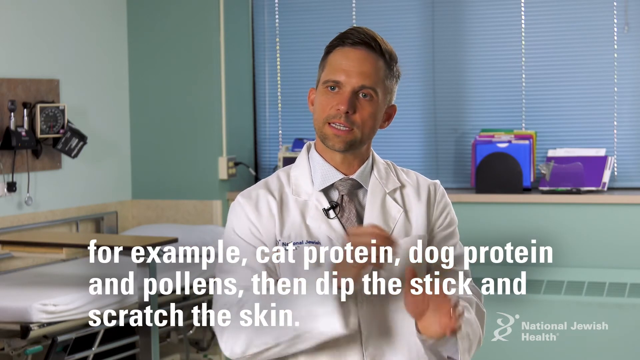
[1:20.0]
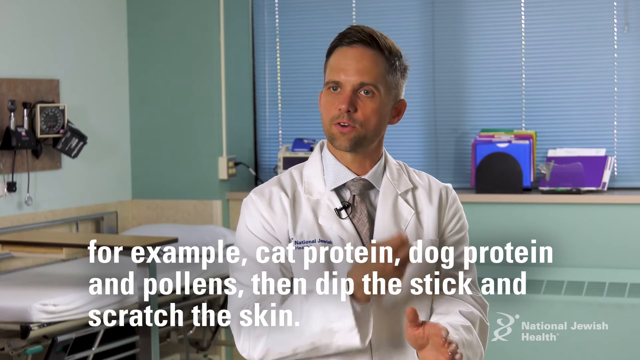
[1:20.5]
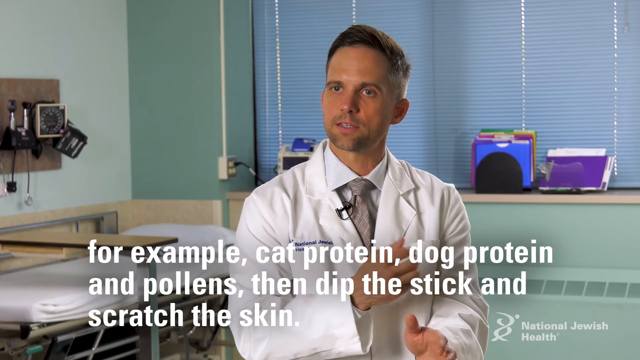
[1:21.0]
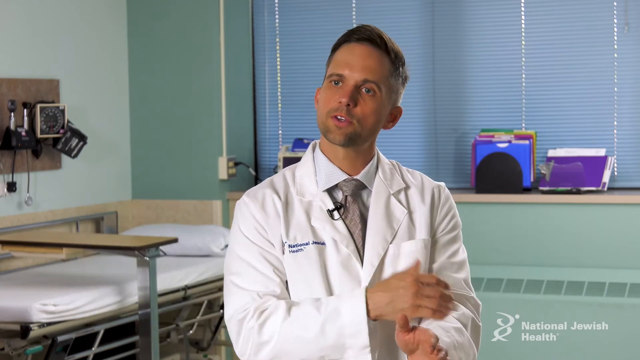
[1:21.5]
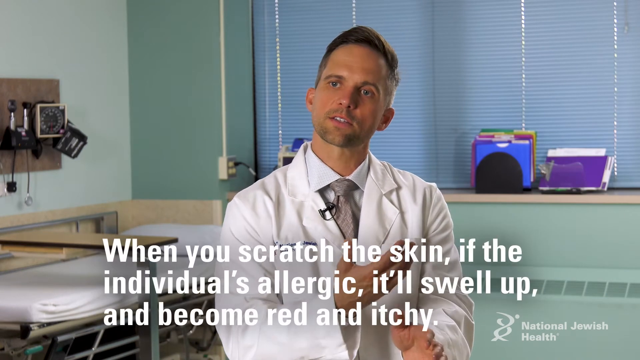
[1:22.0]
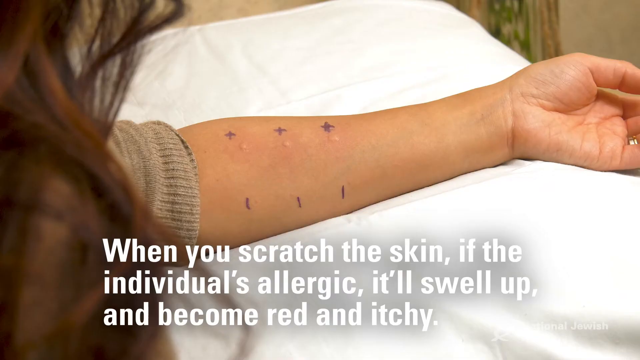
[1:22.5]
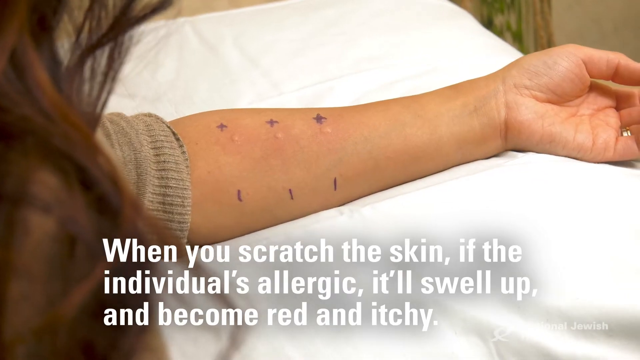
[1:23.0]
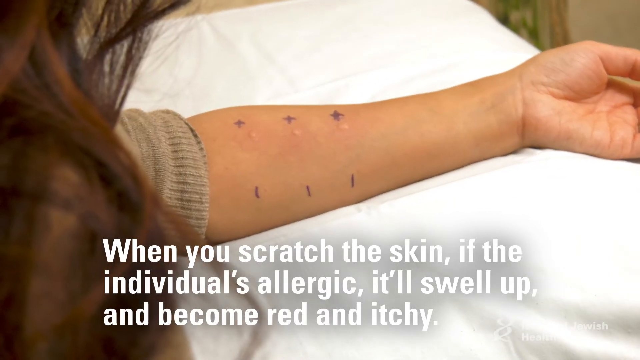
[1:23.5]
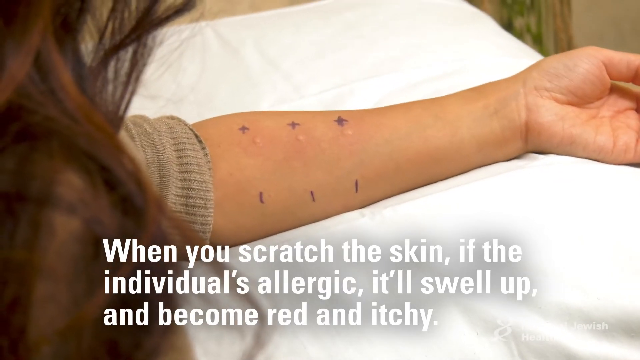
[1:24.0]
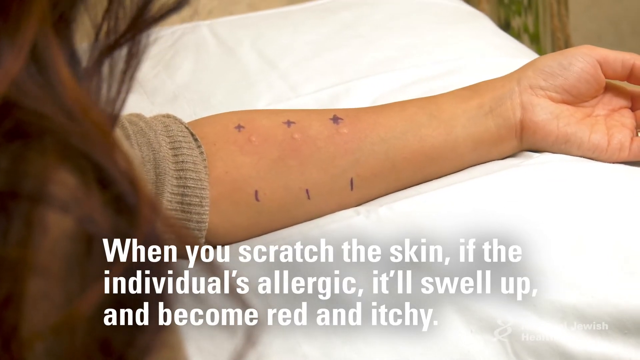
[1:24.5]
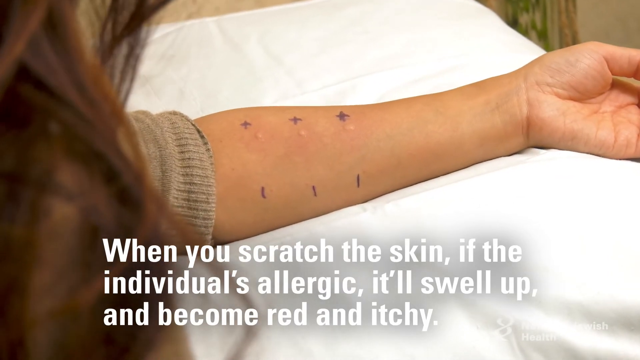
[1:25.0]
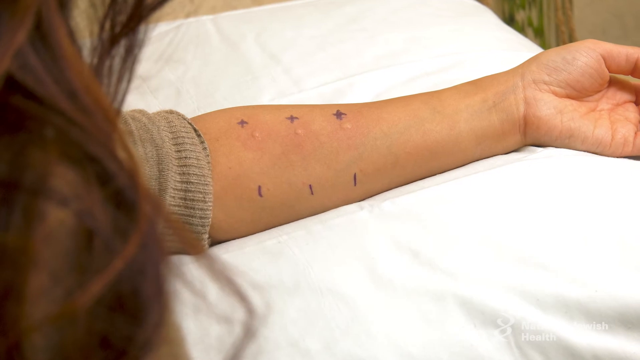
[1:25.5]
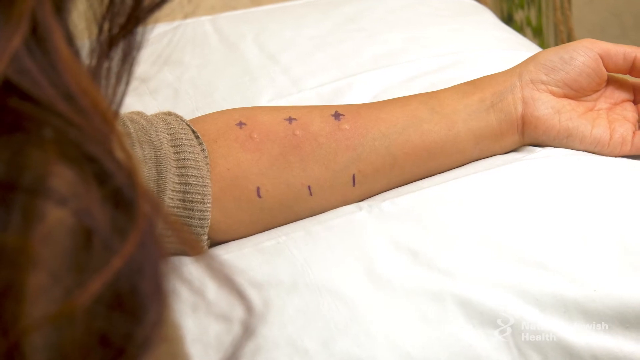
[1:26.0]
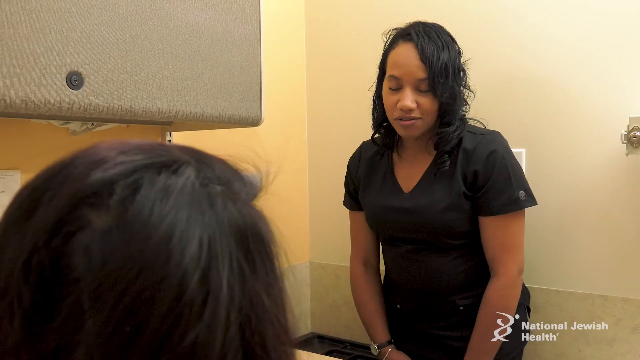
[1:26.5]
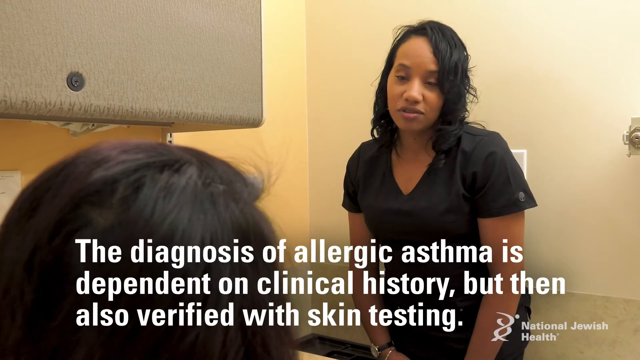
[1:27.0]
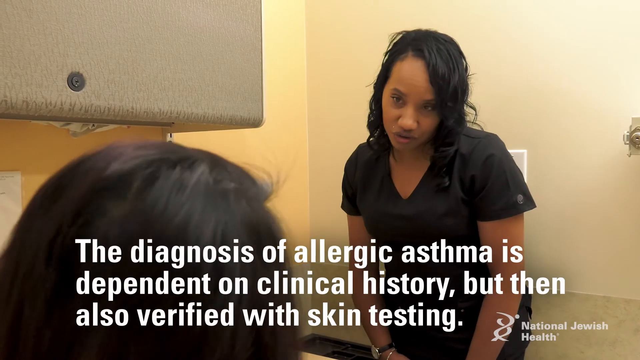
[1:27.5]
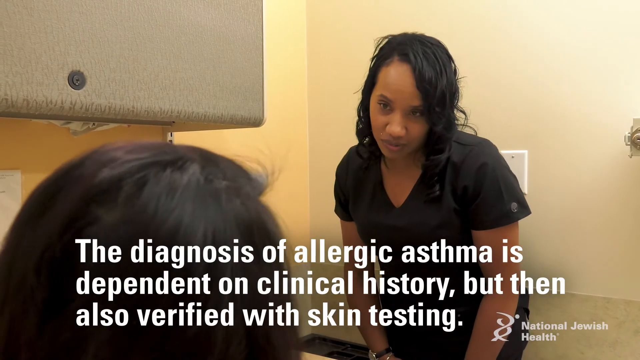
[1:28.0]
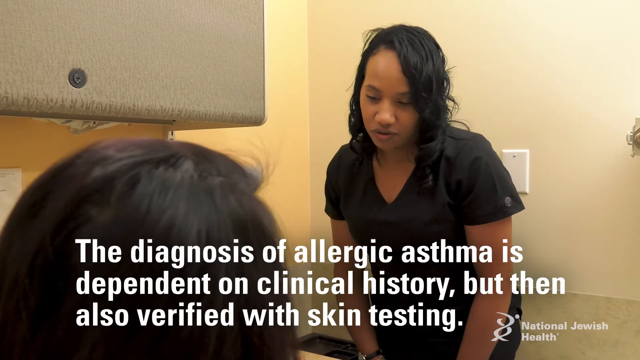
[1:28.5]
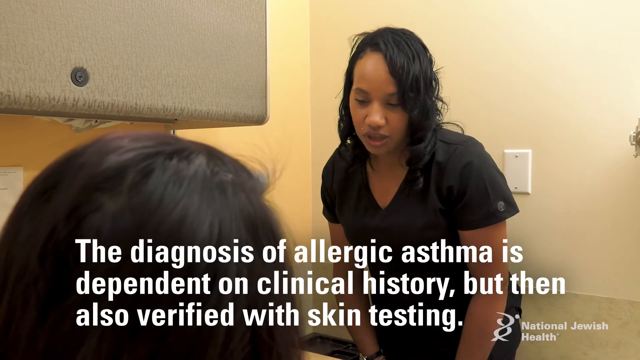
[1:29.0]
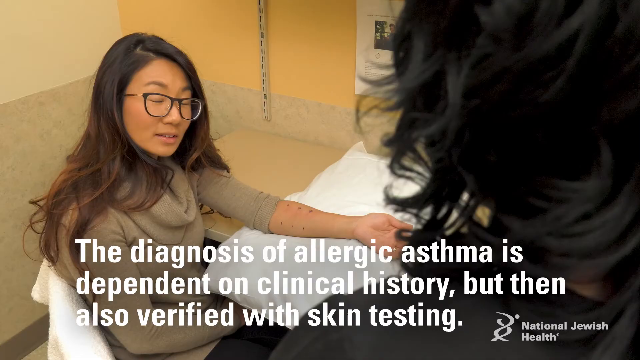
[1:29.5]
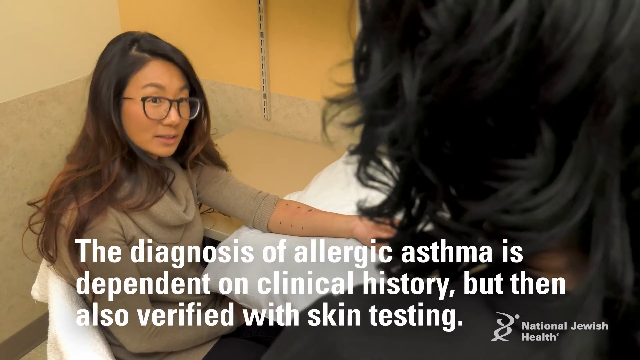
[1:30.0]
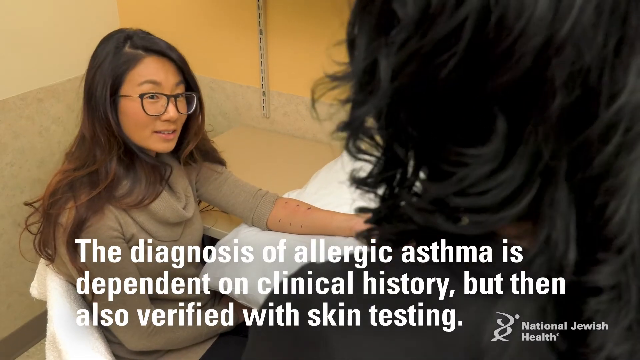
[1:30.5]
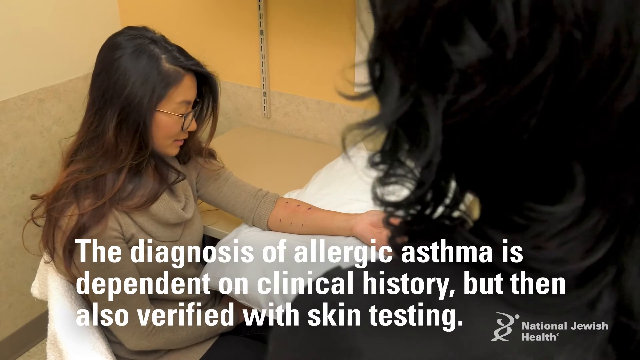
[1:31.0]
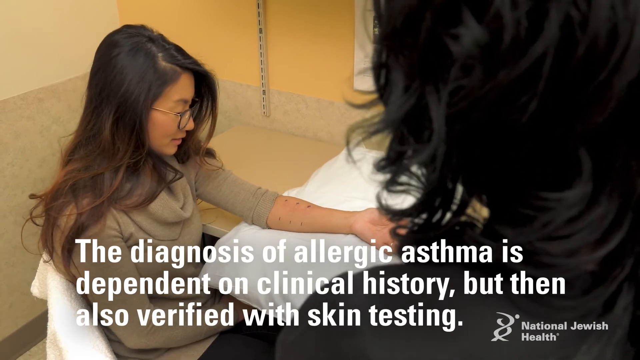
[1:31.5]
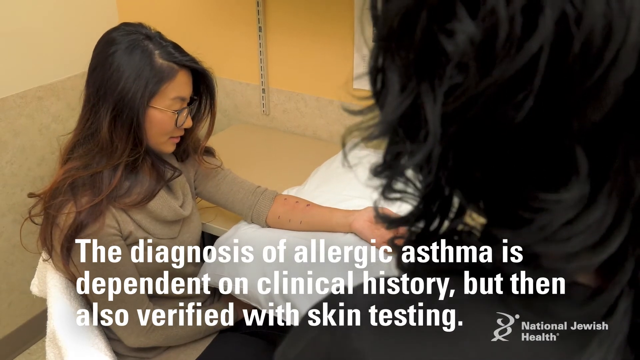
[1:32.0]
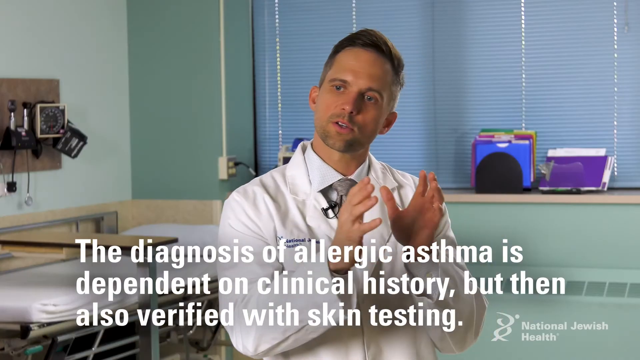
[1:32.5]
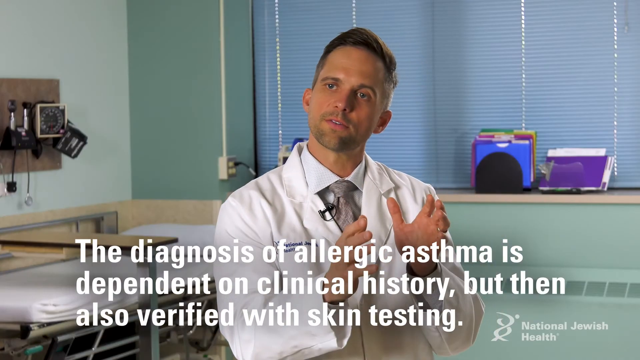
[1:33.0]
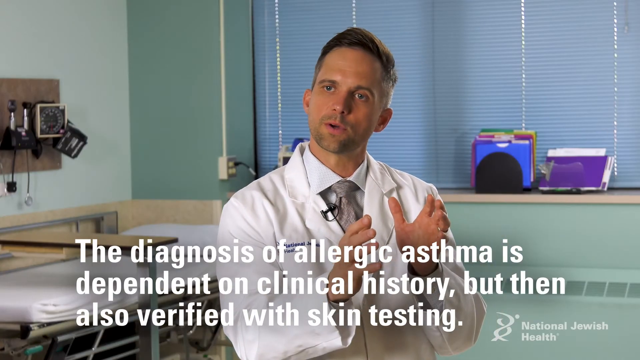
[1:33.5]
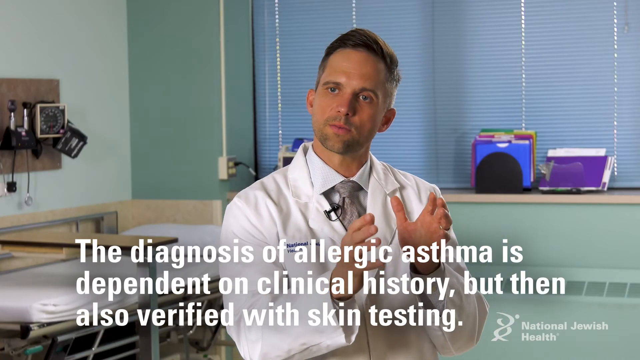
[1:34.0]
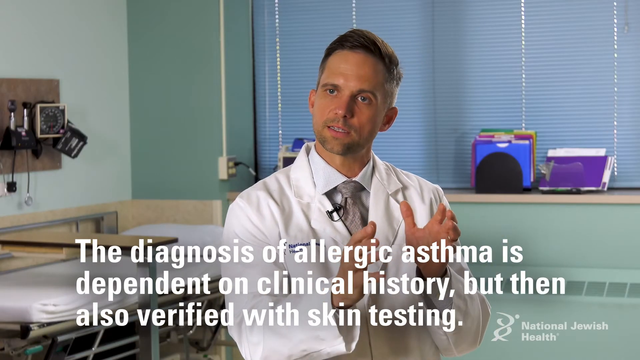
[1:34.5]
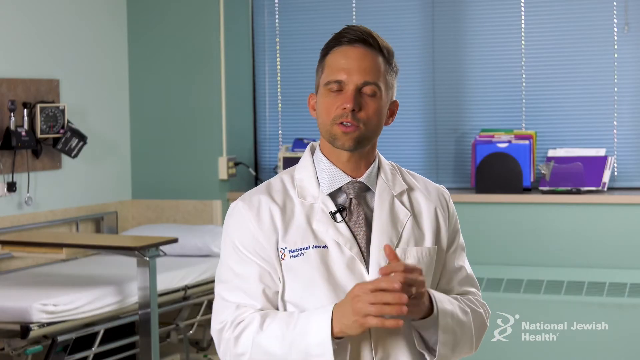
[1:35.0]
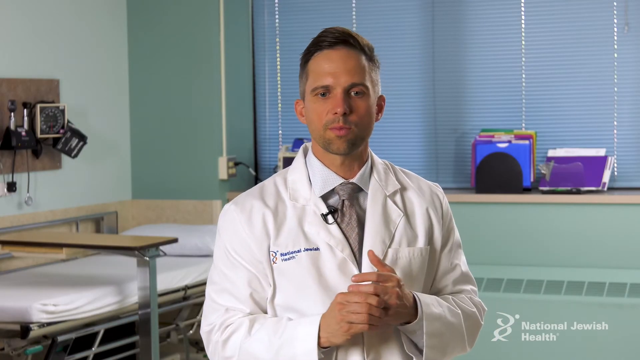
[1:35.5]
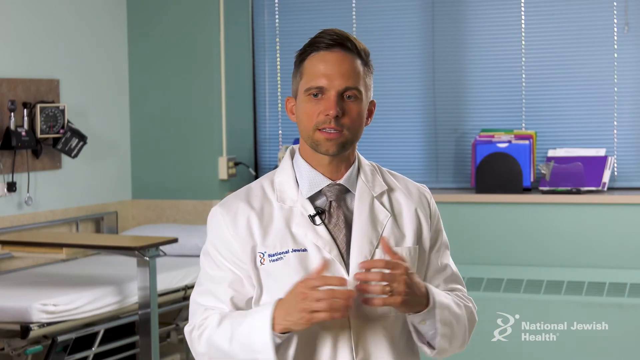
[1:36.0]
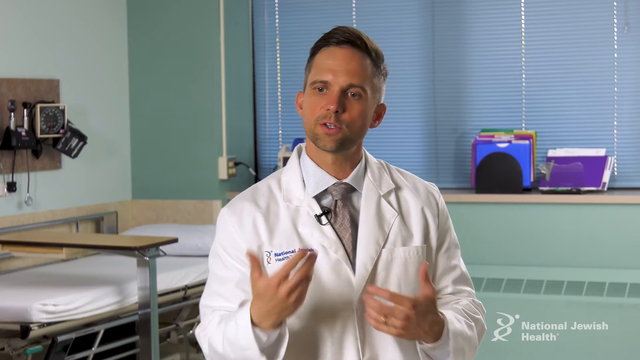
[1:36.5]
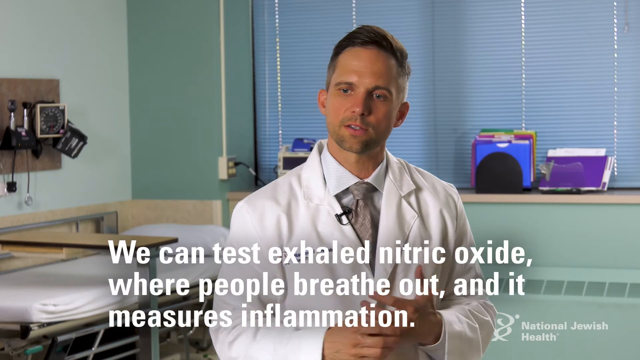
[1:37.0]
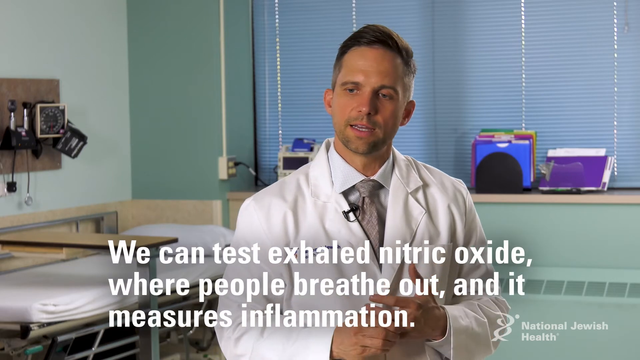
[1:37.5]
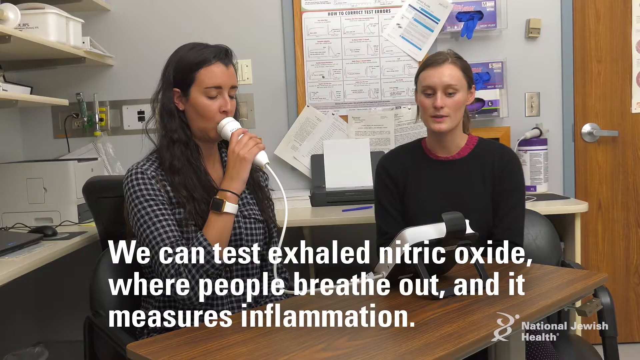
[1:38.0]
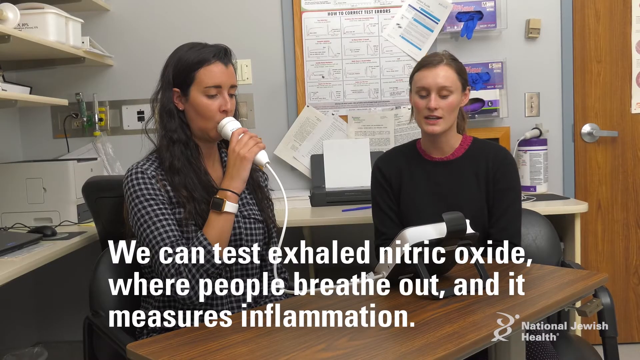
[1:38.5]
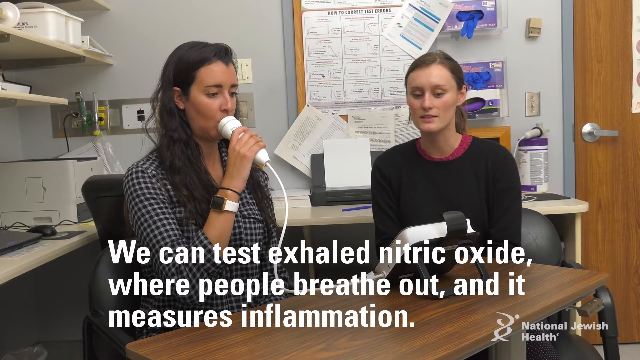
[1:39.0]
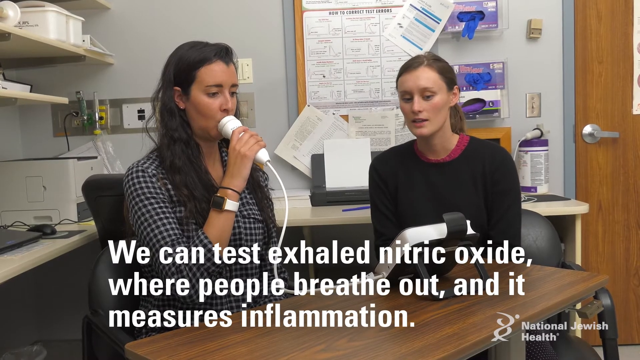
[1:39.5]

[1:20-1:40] The doctor talks, and text beneath him reads "for example, cat protein, dog protein, and pollen. Then dip the stick and scratch the skin". Then the screen reads "when you scratch the skin, if you have an allergy to a certain thing, it will swell up and become red and itchy". The girl's arm is shown with three plus signs that have little welts underneath them, apparently controls, and three dashes where nothing has happened. Text beneath her reads "when you scratch the skin, if the individual's allergic, it will swell up and become red and itchy". She wears a brown sweater with the sleeve pushed up. Her face is shown: she wears glasses and has really long brown hair.